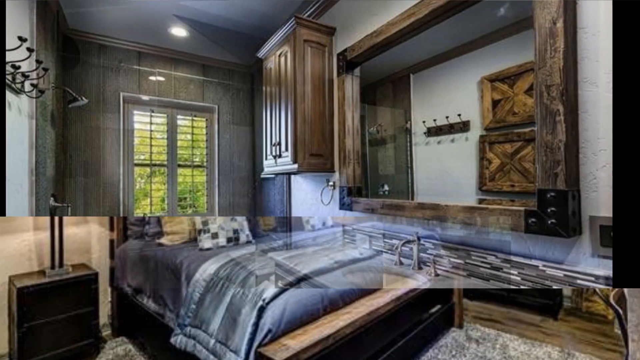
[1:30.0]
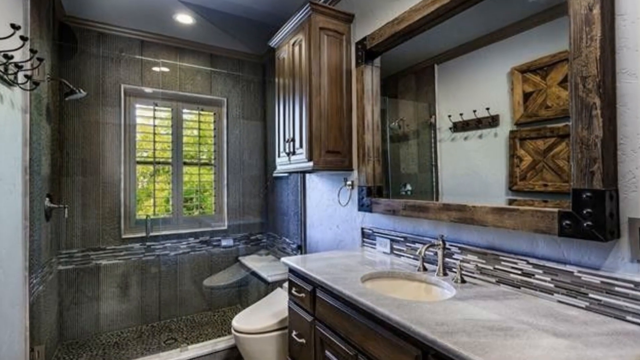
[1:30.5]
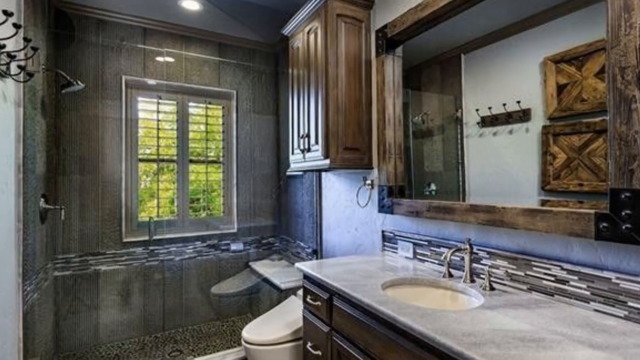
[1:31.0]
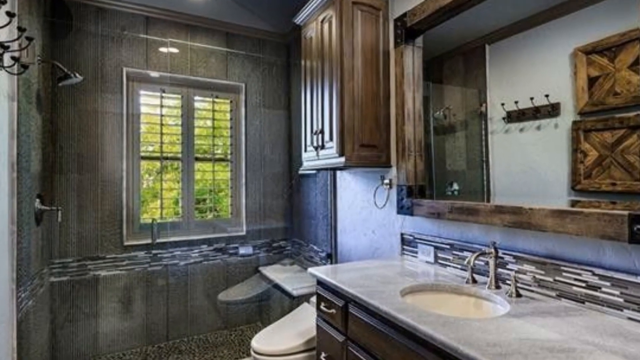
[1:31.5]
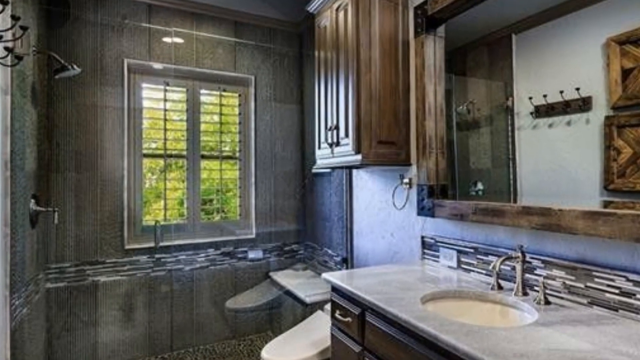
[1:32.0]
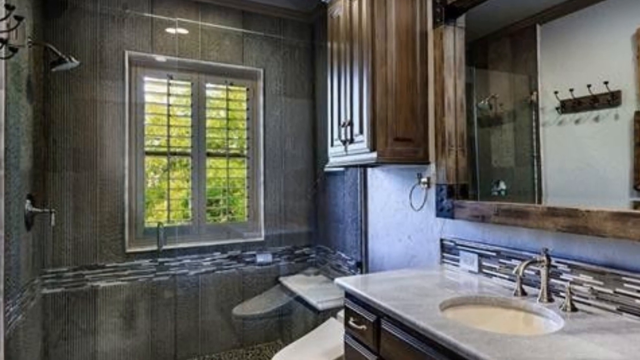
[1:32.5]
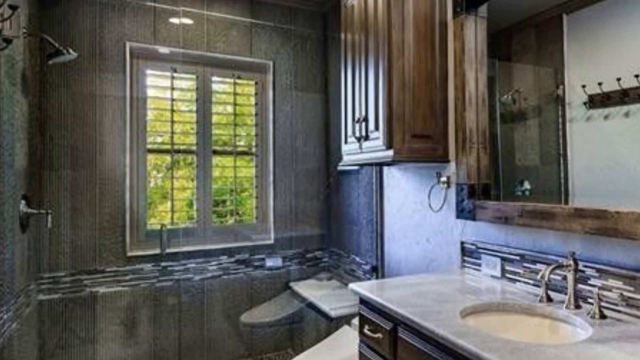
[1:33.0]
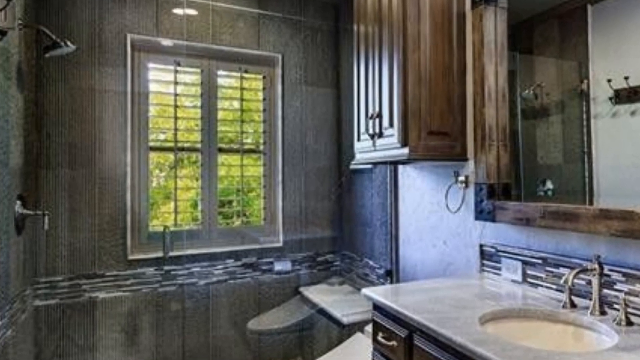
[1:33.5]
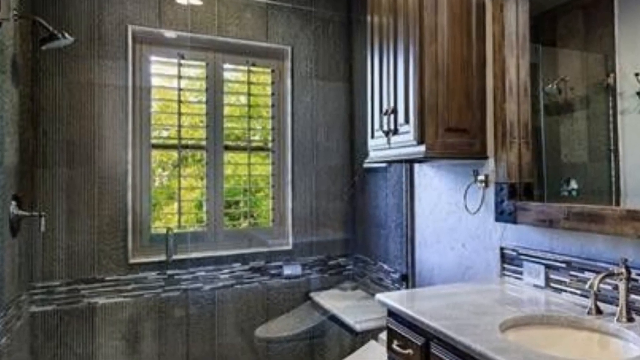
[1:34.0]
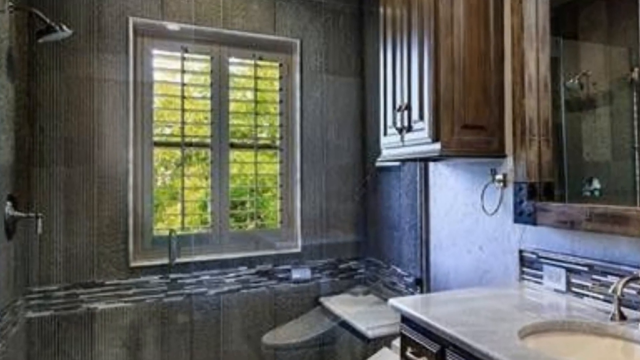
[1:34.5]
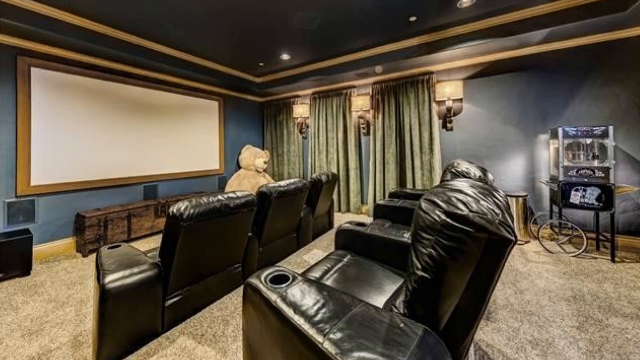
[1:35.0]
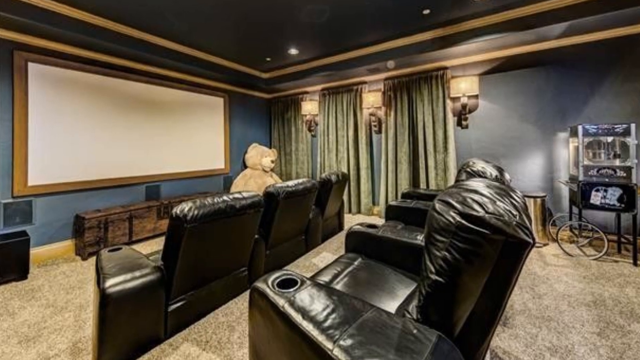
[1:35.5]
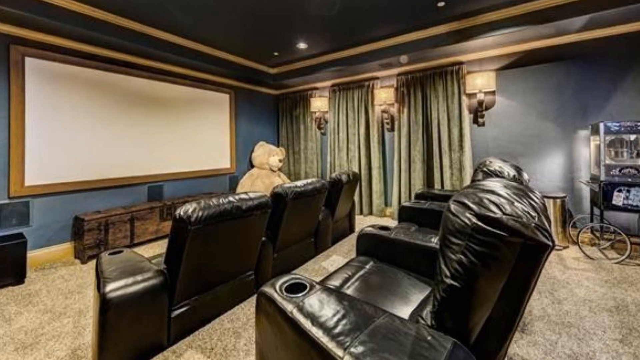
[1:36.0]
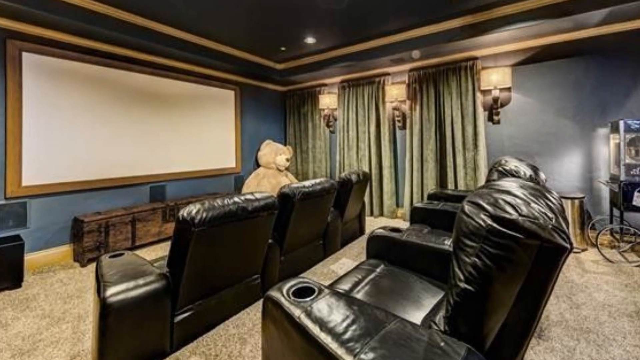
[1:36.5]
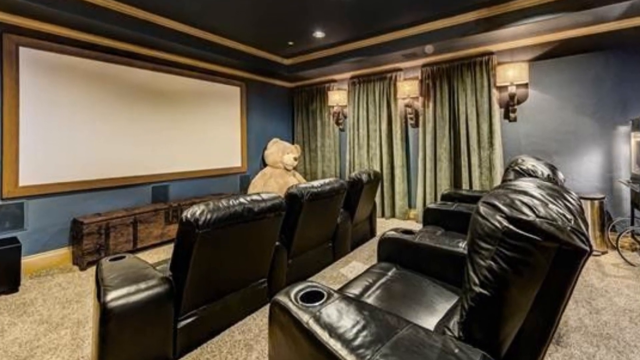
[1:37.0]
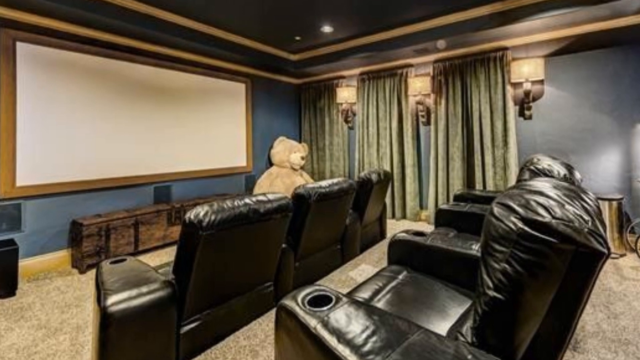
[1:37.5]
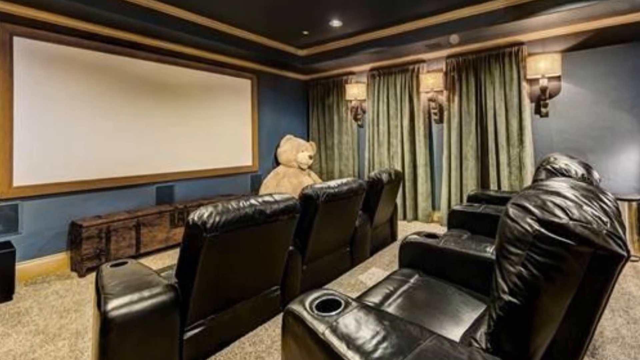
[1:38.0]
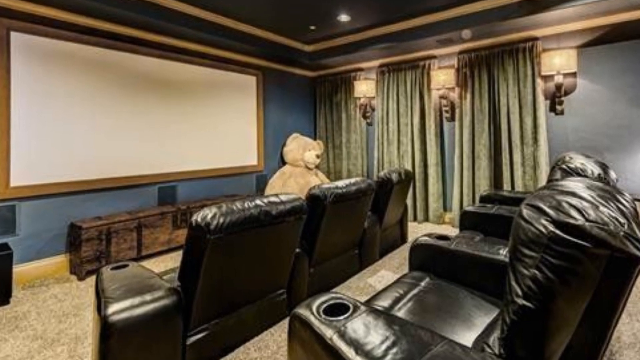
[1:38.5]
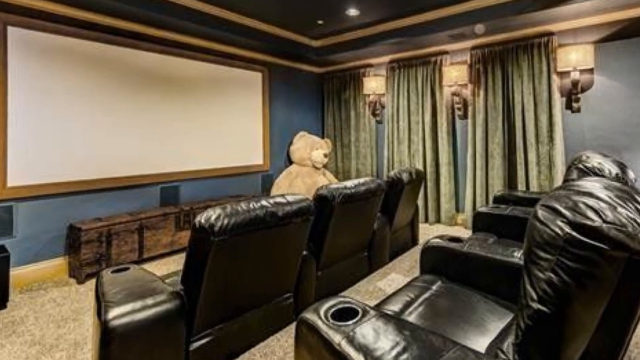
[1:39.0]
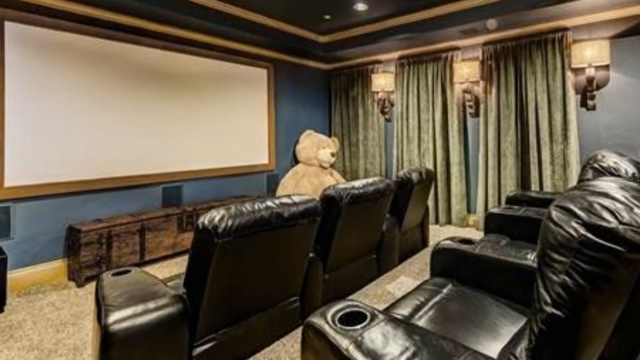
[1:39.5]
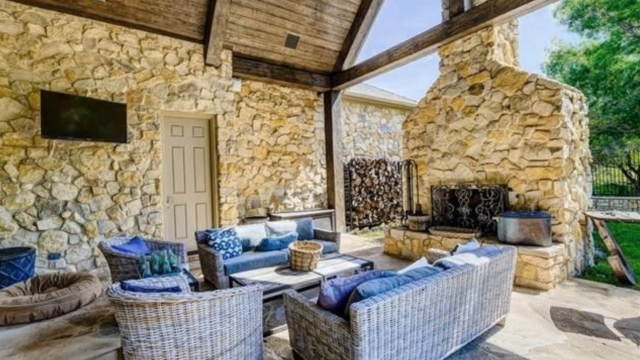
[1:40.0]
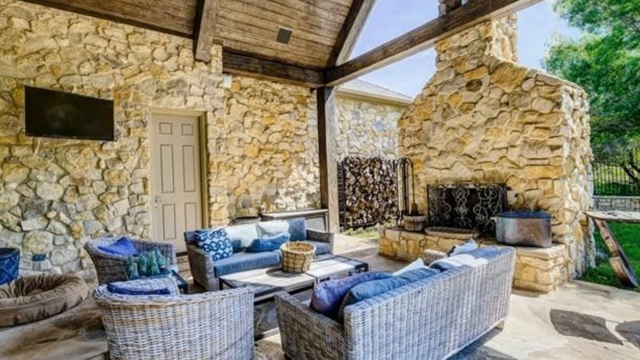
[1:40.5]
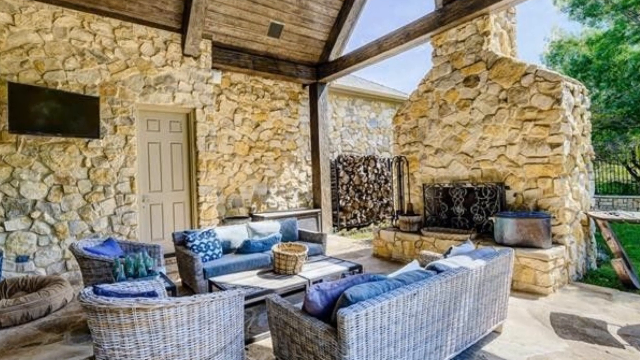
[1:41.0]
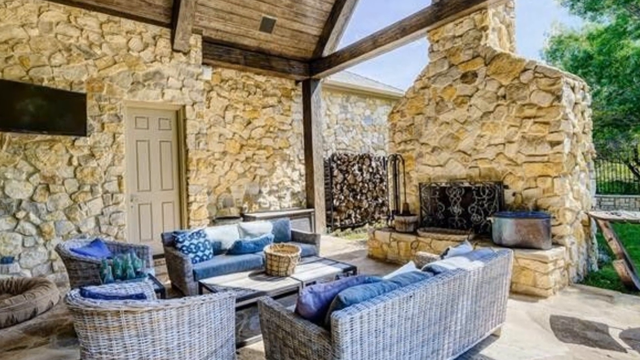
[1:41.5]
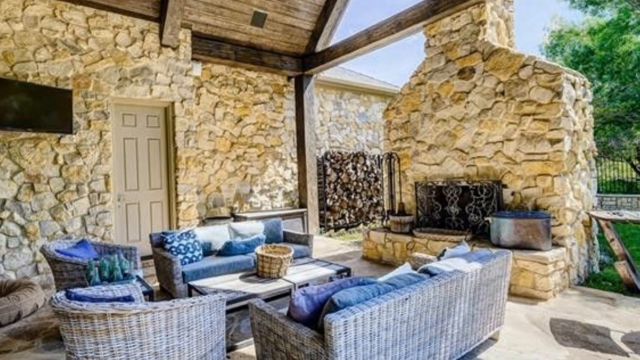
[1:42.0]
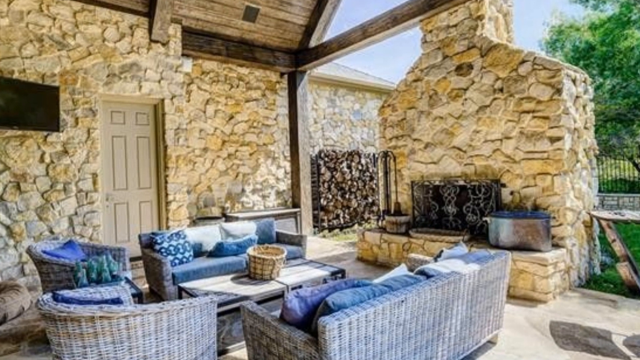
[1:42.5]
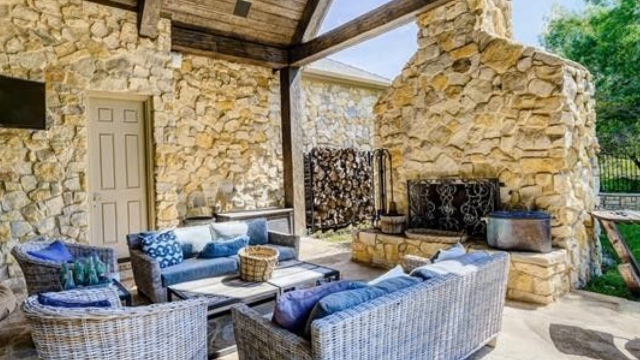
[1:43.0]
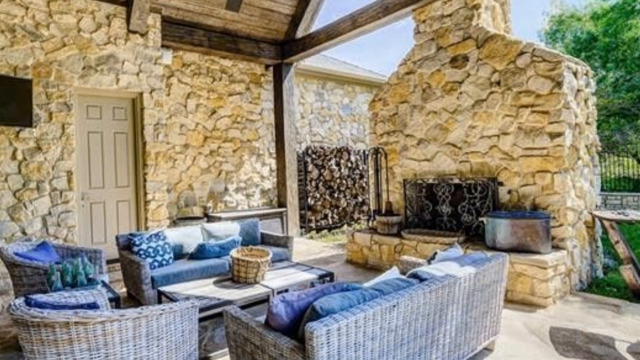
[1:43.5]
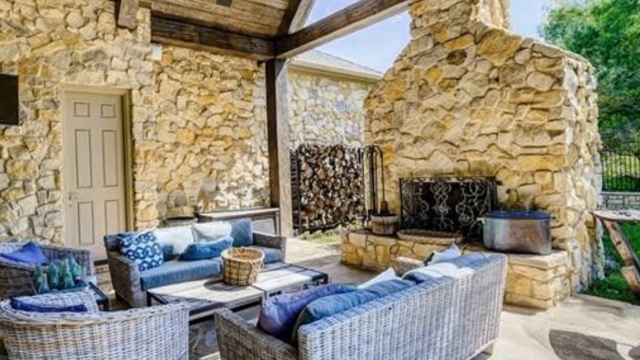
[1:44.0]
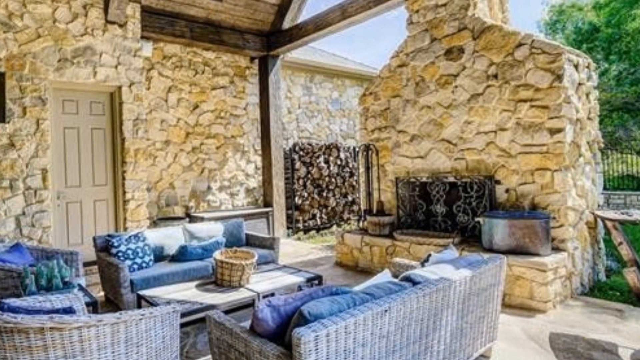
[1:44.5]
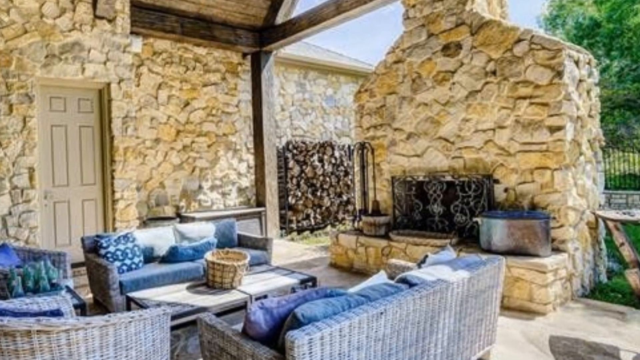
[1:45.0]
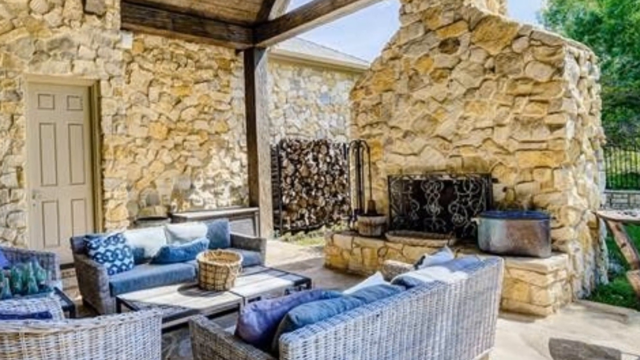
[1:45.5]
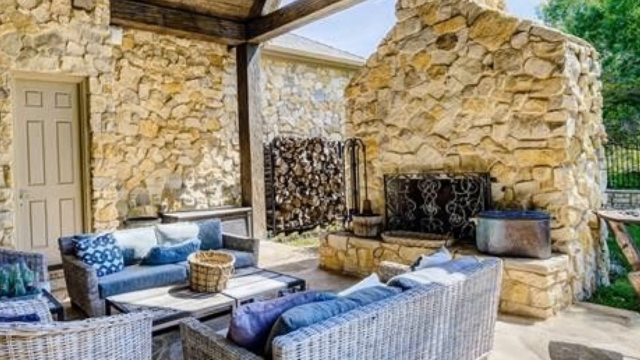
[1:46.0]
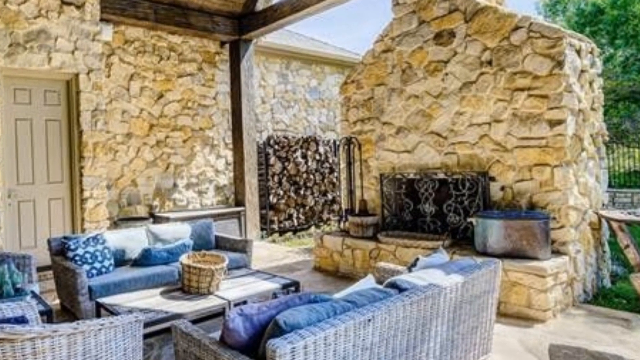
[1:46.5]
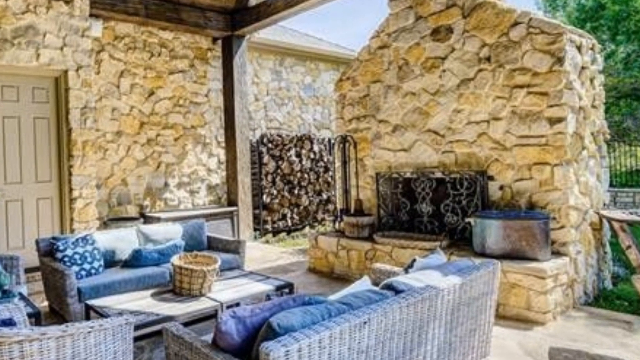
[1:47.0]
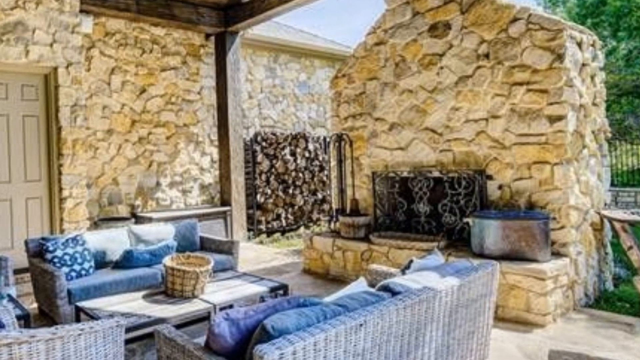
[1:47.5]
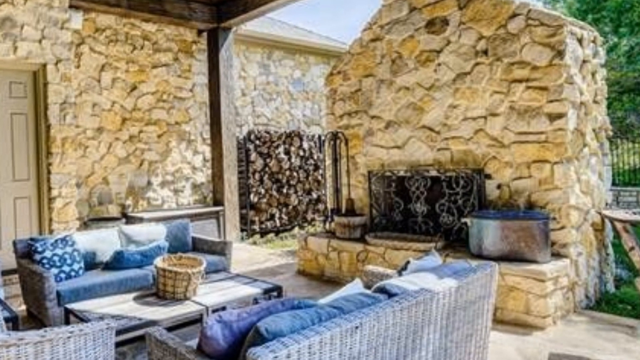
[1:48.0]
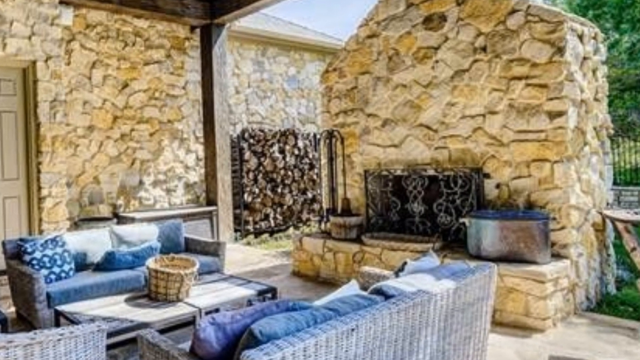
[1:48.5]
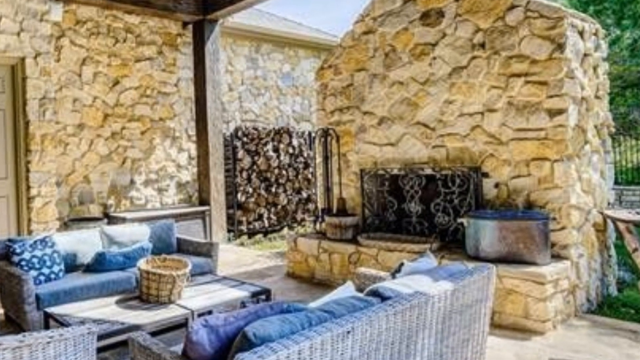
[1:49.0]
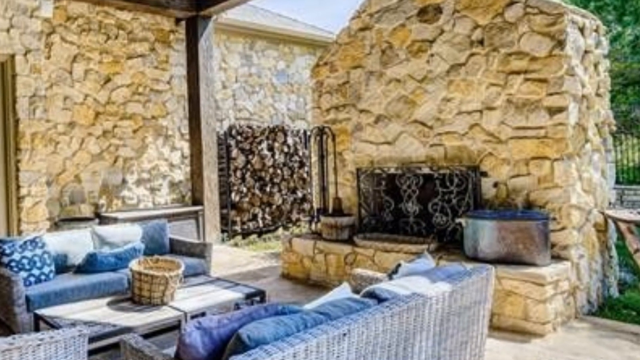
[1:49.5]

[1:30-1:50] Another bathroom, bigger than the earlier one, is shown, with quite a large mirror, a decent-sized sink and sink top, and cabinetry hanging from the wall, including a cupboard. The toilet and the room itself look very modern. The view switches to a cinema room with apparently at least six leather recliner cinema seats, all with drink holders. In the corner of the room is a very large, fluffy-looking teddy bear, and there is a large projector screen. The view then goes outside to a terrace area with a huge stone fireplace and a lot of seating. A TV is on the top left of the left wall, and there are trees in the background.